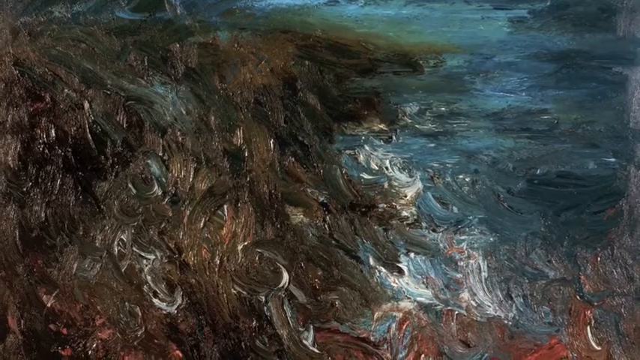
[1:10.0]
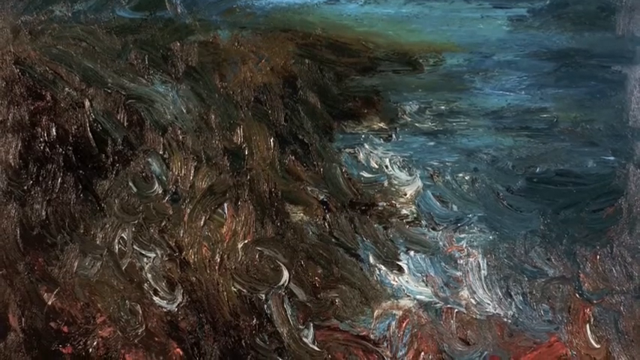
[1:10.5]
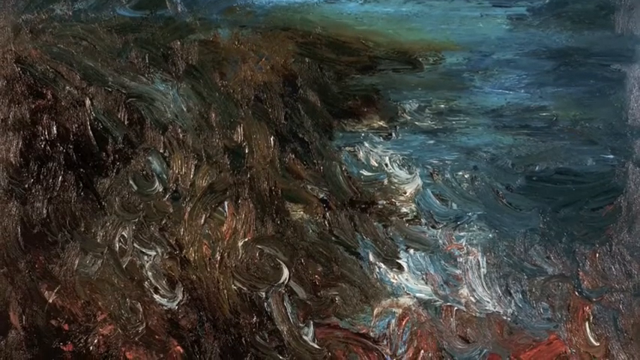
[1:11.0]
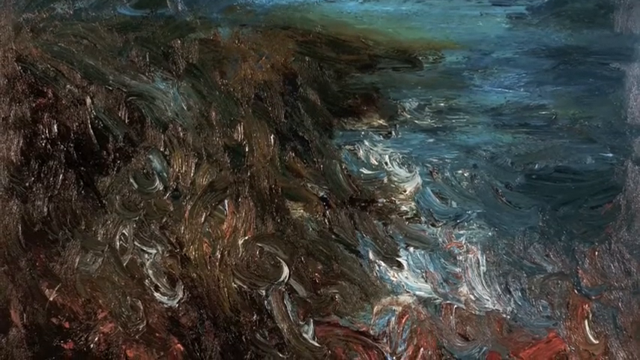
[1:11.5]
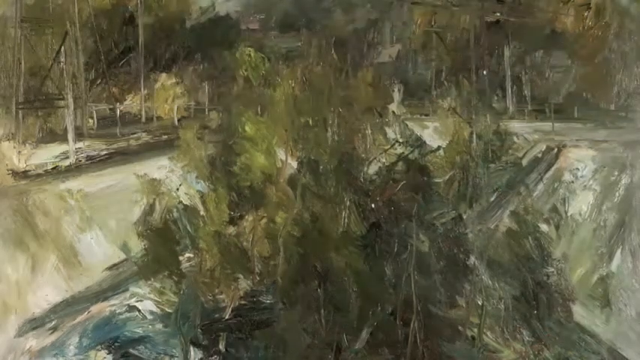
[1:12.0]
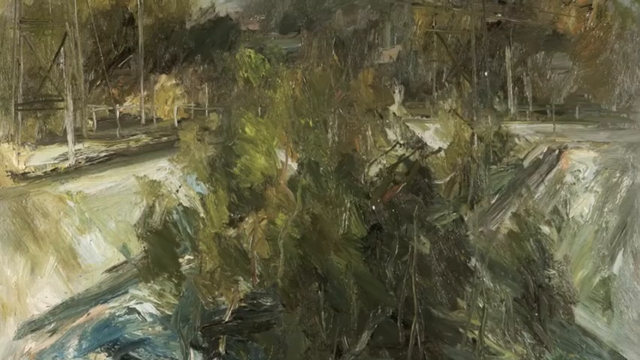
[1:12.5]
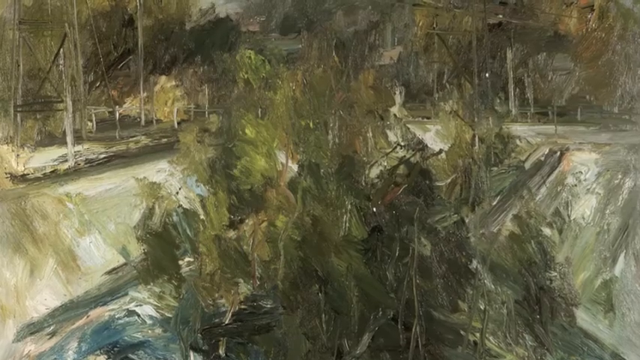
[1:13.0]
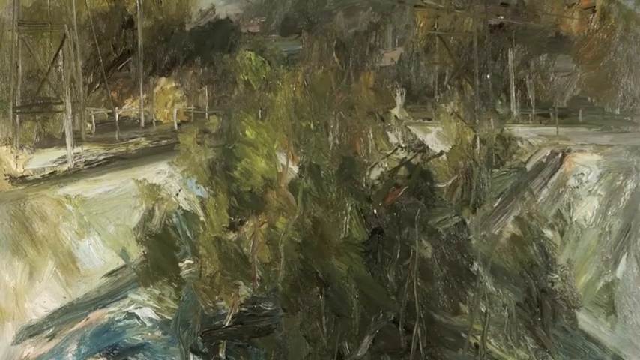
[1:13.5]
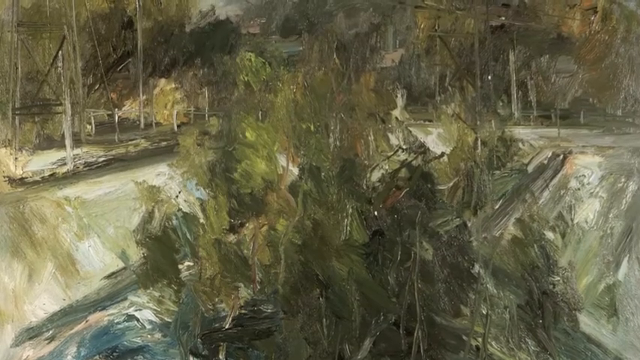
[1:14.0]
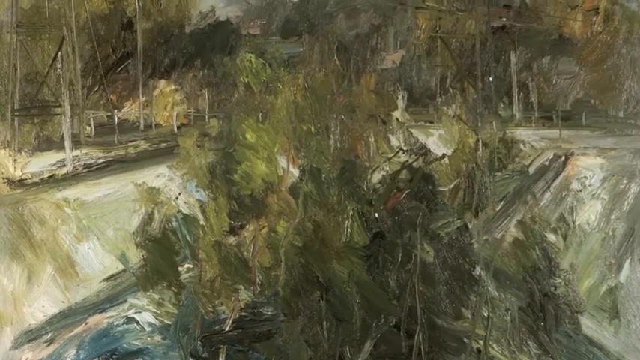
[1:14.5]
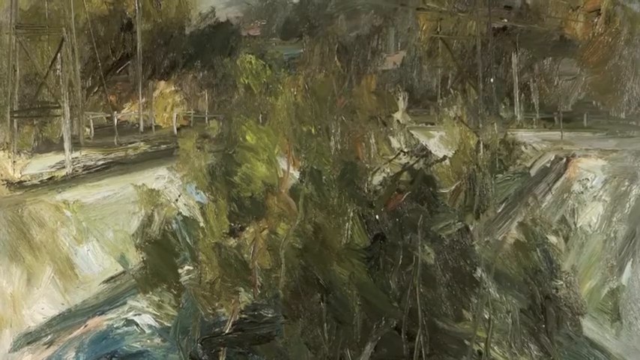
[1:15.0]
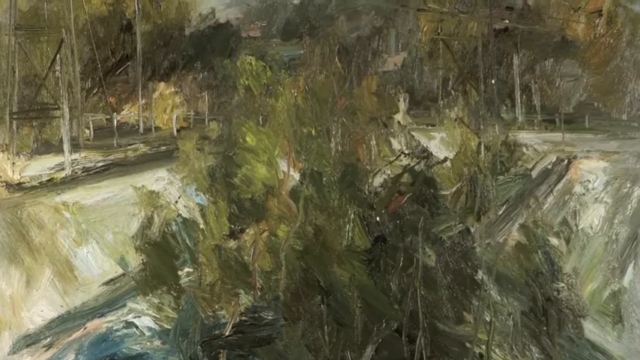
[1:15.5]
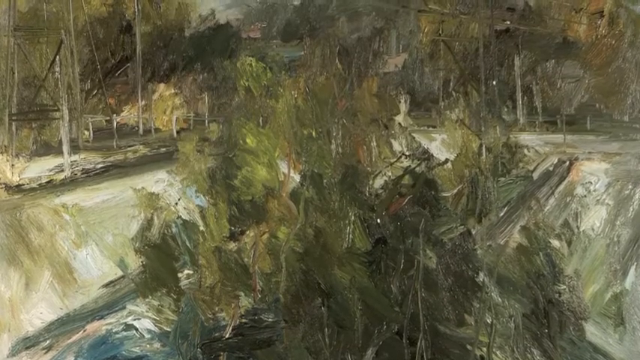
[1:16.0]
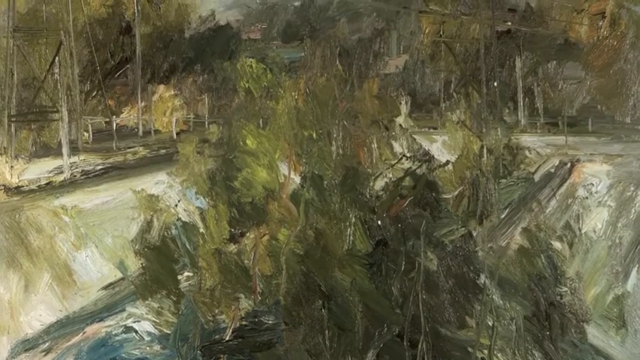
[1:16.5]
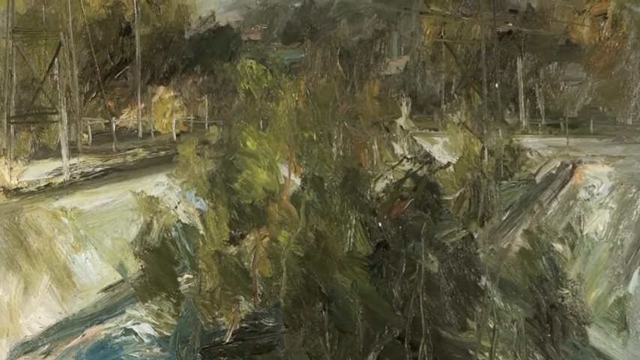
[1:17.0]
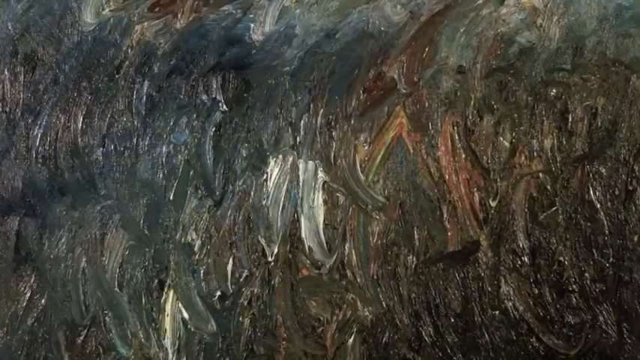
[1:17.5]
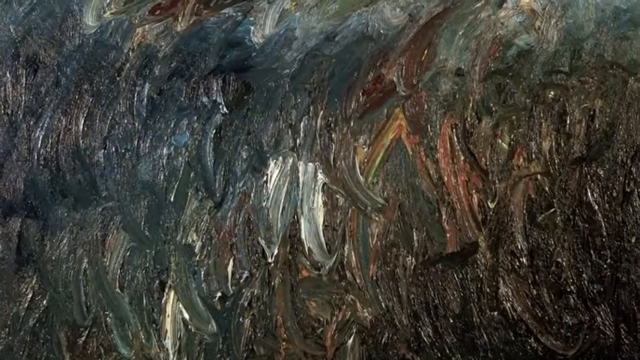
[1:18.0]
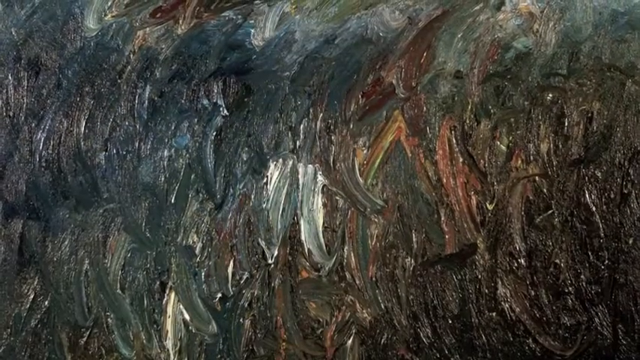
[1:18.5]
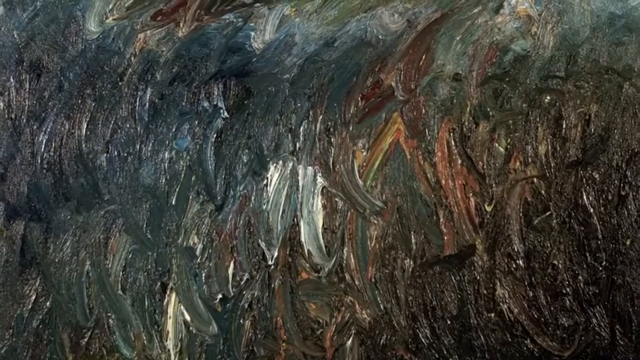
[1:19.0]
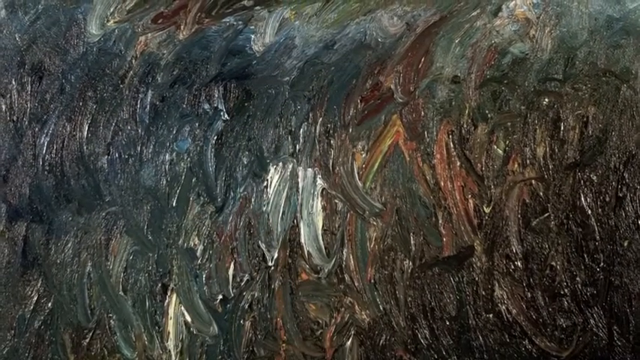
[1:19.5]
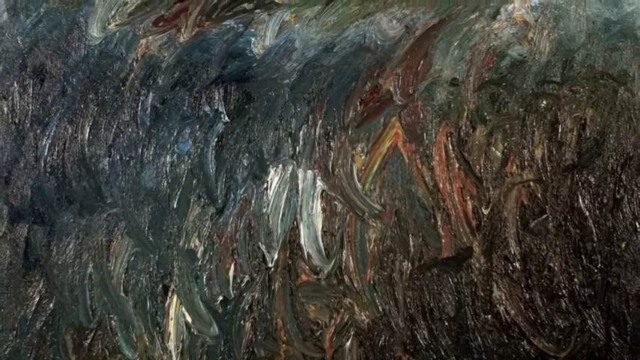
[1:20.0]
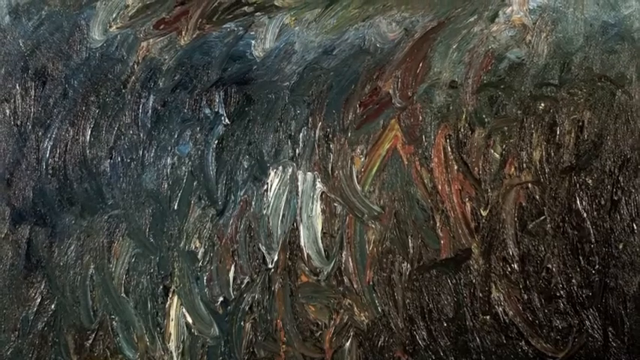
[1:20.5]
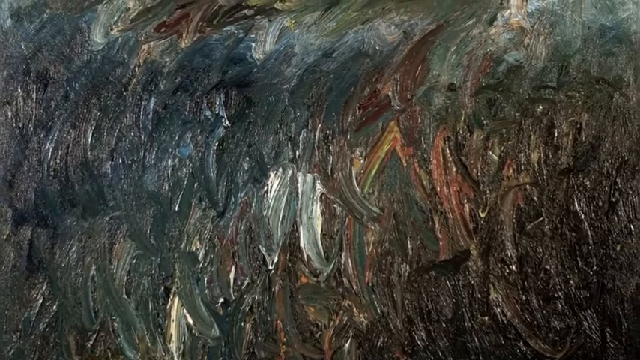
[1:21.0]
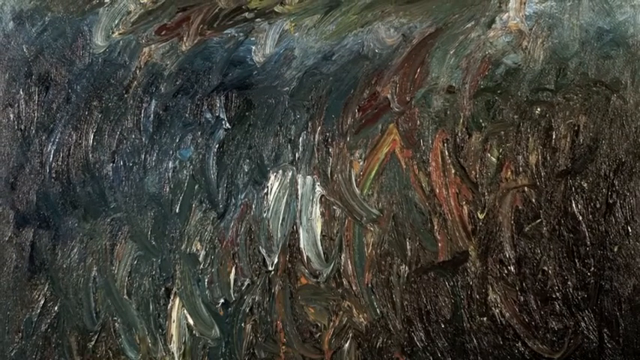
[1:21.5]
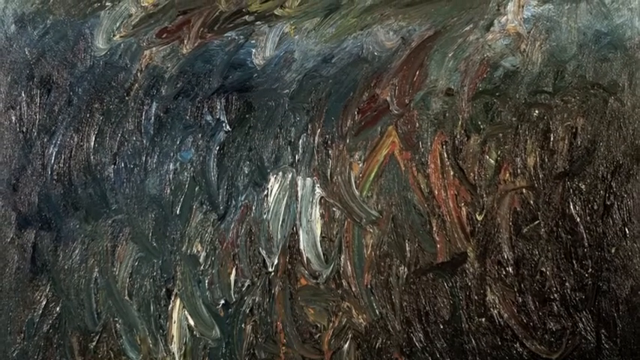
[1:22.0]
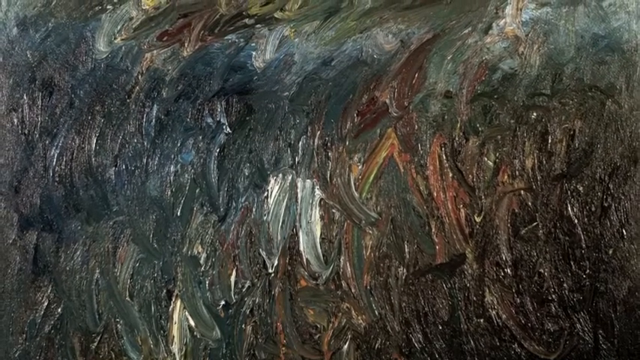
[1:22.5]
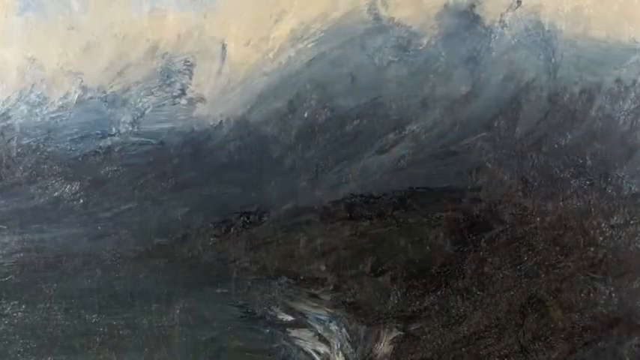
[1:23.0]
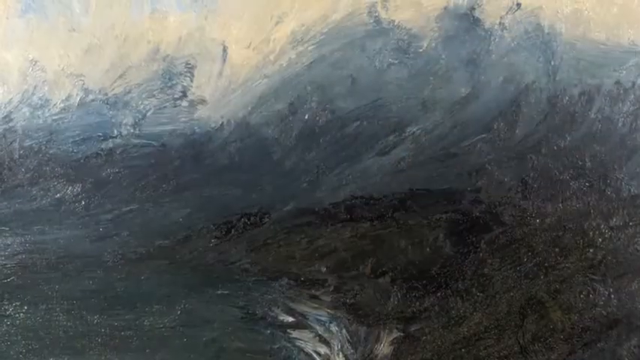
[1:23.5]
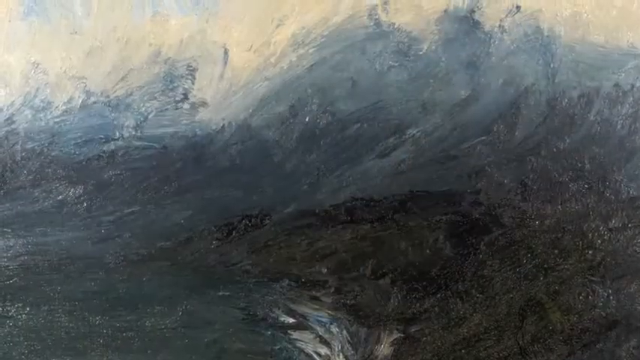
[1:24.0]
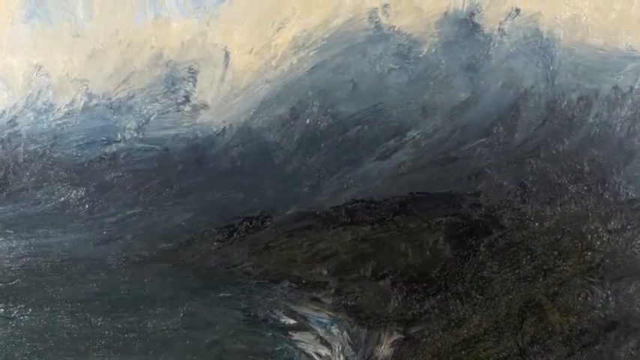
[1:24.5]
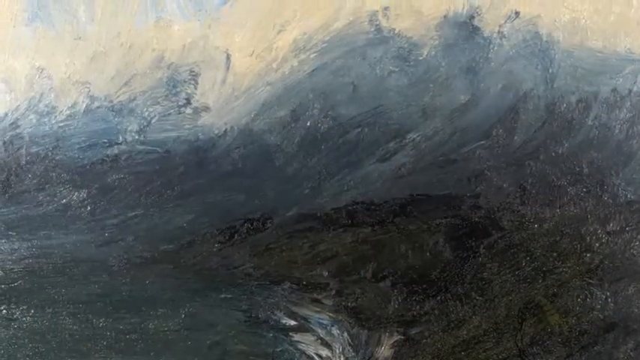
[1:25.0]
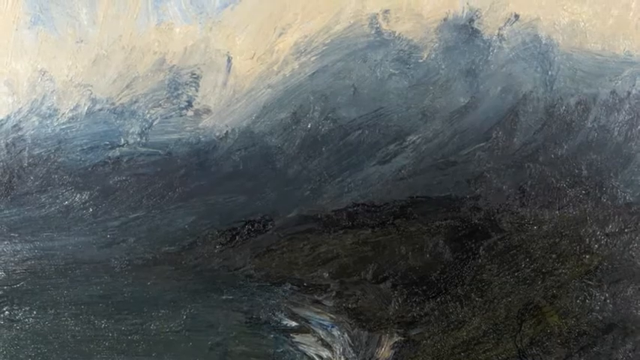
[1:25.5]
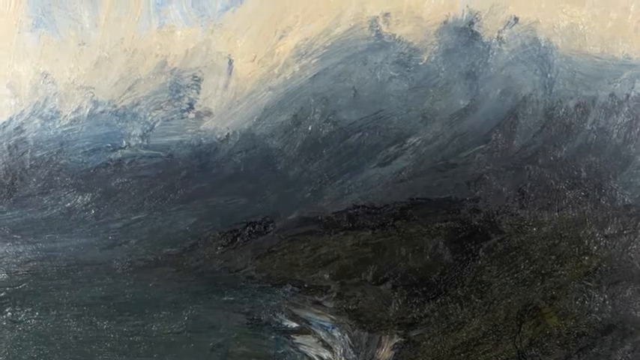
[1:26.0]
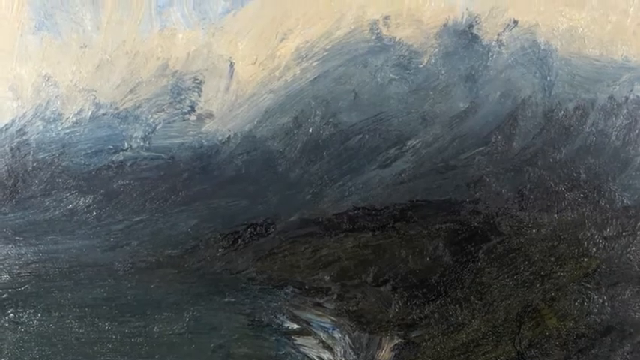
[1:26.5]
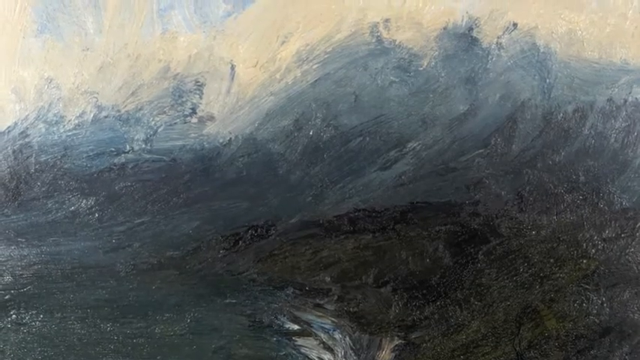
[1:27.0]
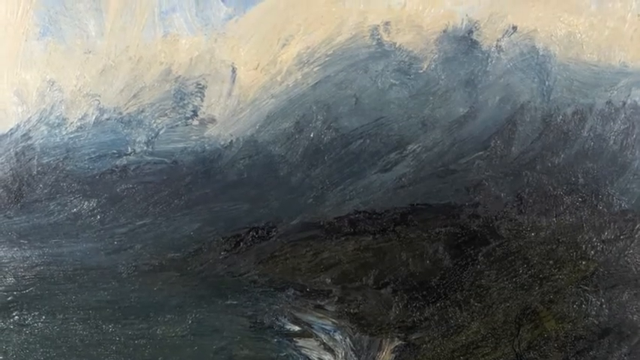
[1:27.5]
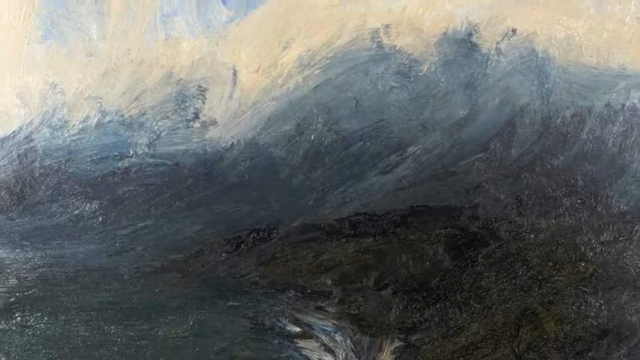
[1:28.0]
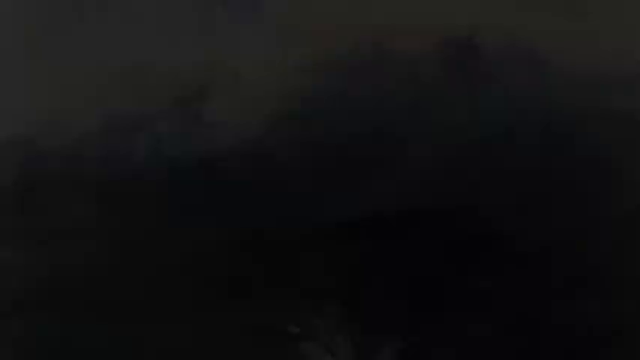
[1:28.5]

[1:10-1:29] A painting with some gold in it appears, and it seems lighter than the others. The other paintings are all dark, including a dark sea.